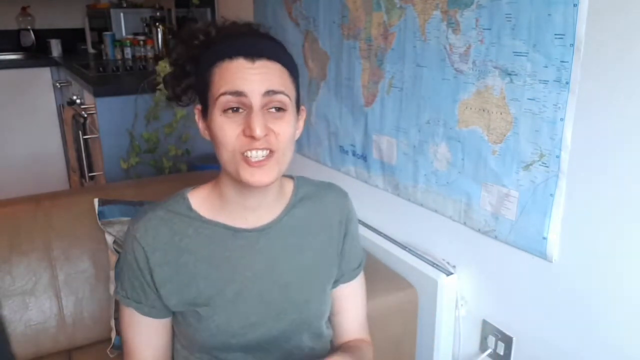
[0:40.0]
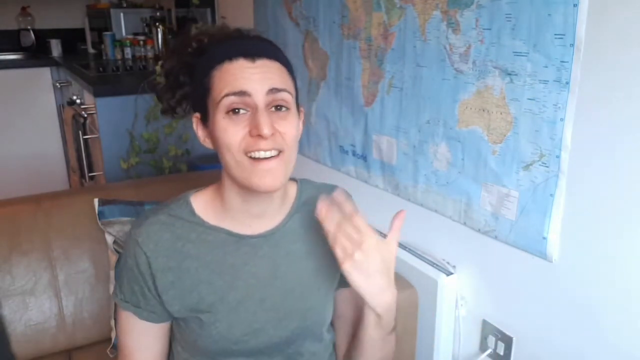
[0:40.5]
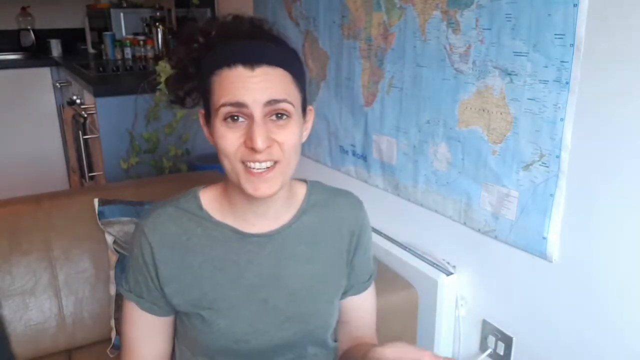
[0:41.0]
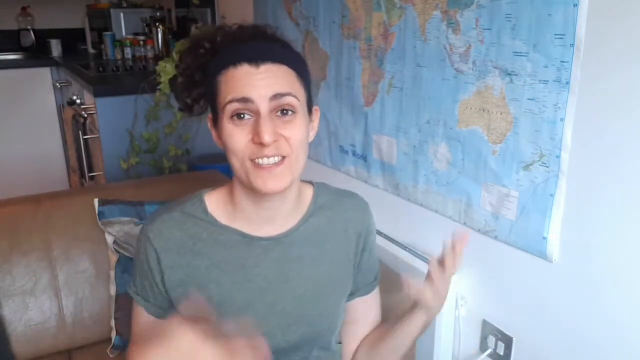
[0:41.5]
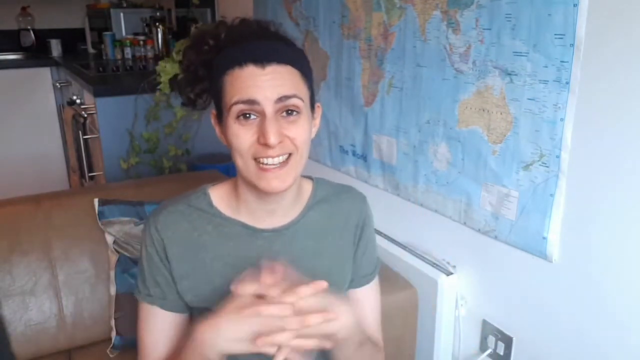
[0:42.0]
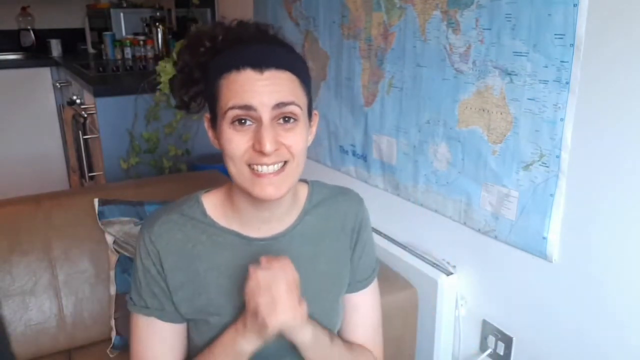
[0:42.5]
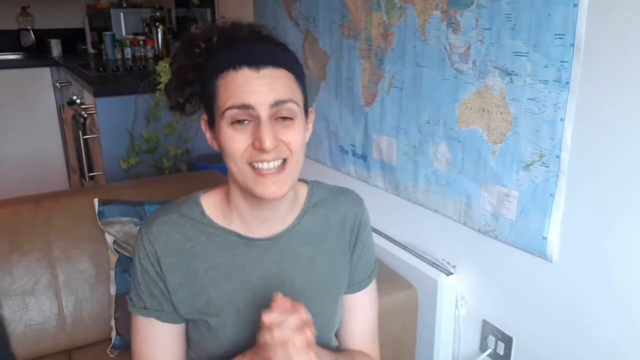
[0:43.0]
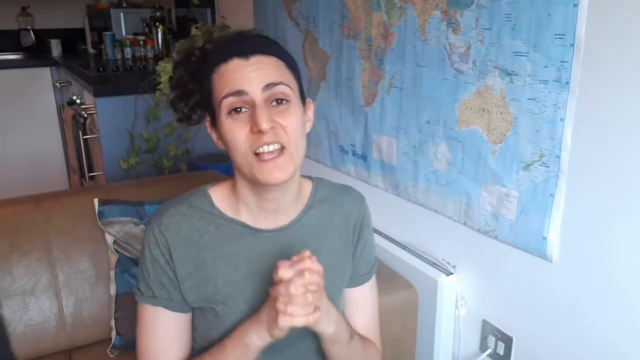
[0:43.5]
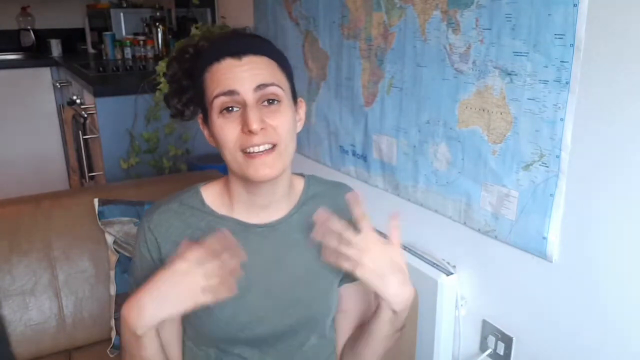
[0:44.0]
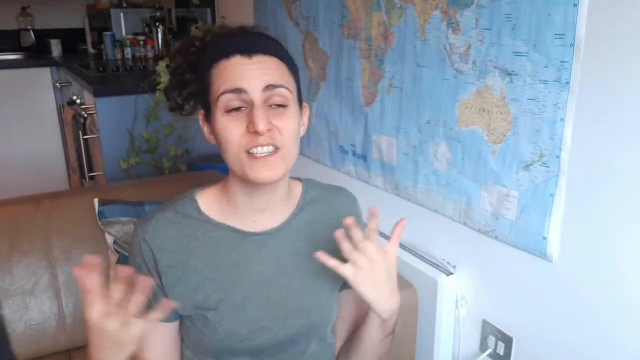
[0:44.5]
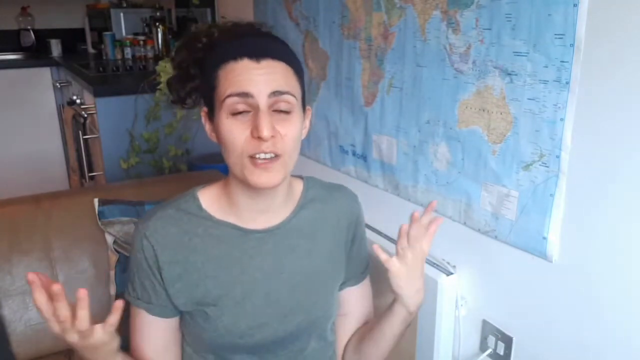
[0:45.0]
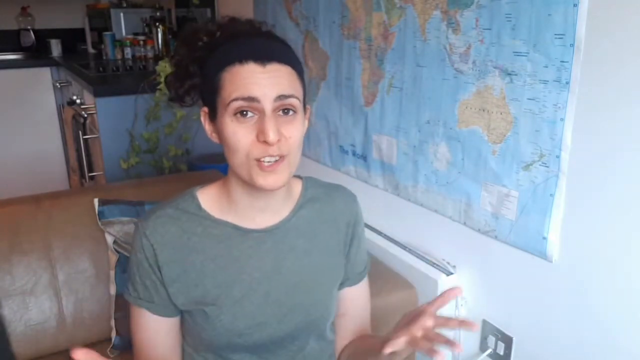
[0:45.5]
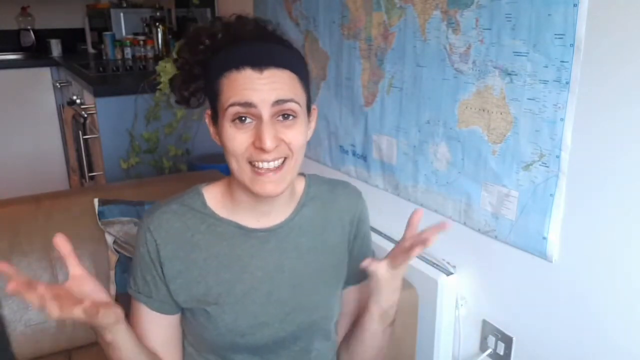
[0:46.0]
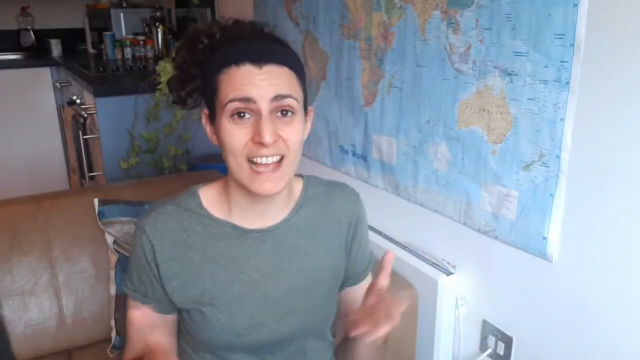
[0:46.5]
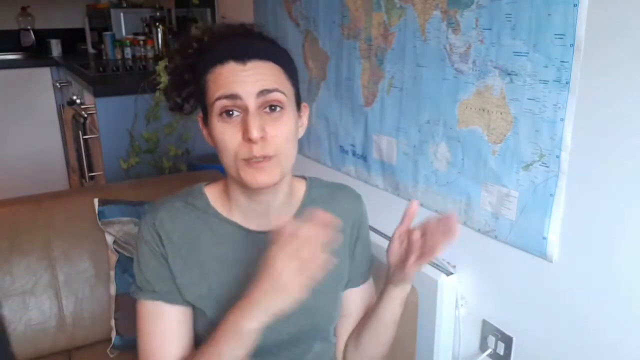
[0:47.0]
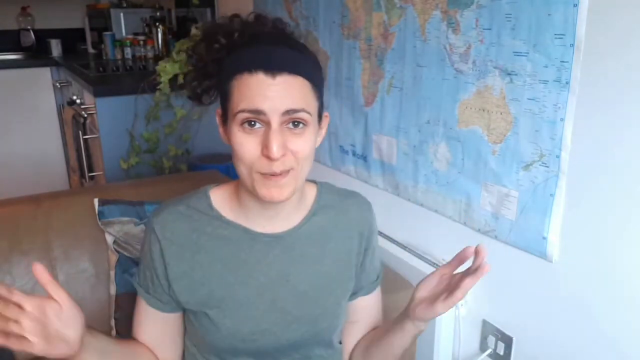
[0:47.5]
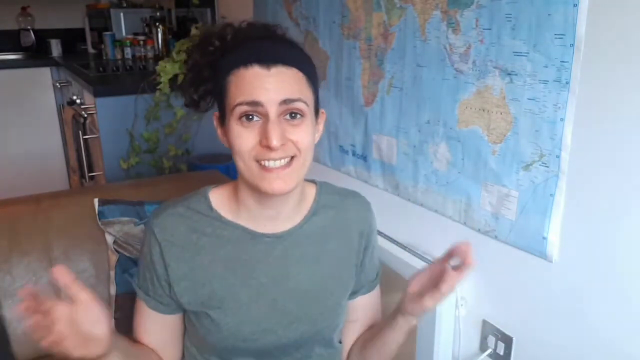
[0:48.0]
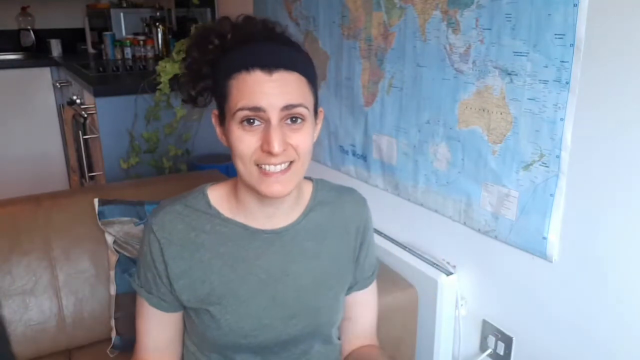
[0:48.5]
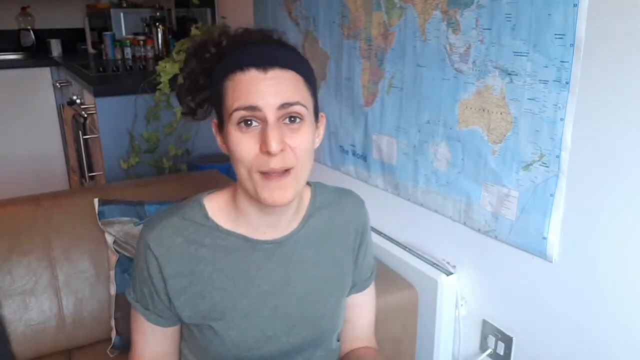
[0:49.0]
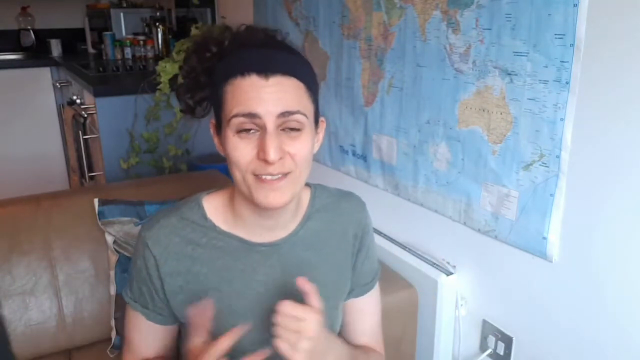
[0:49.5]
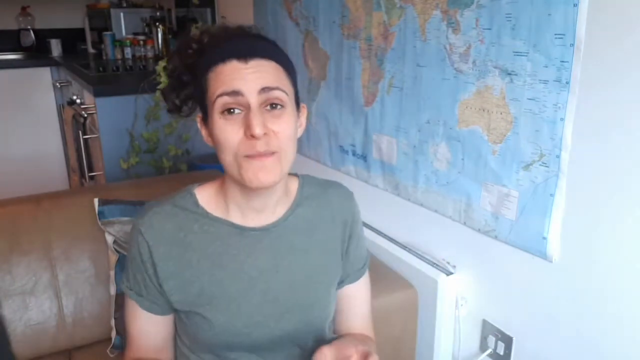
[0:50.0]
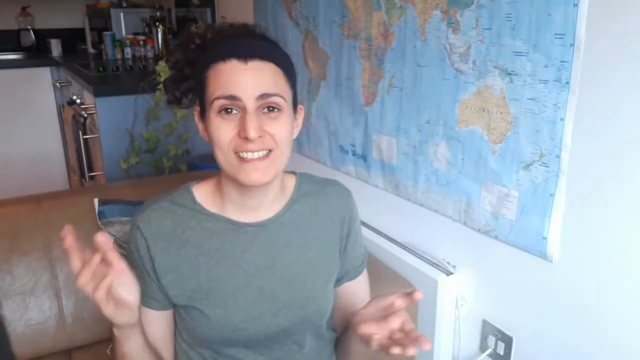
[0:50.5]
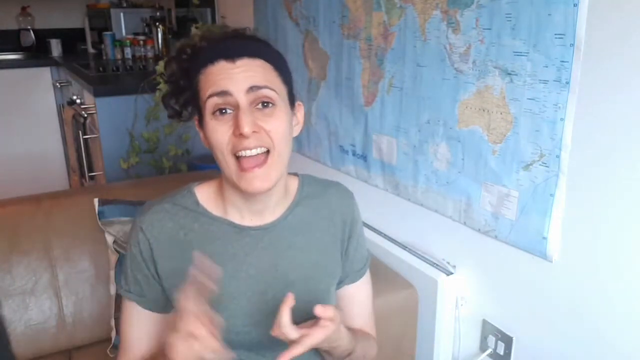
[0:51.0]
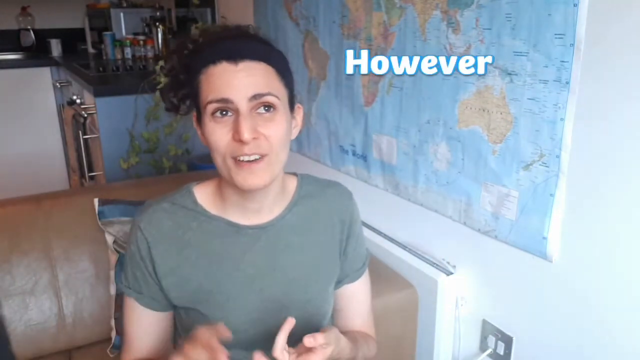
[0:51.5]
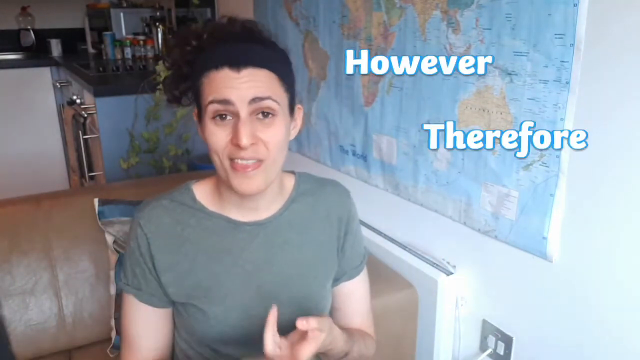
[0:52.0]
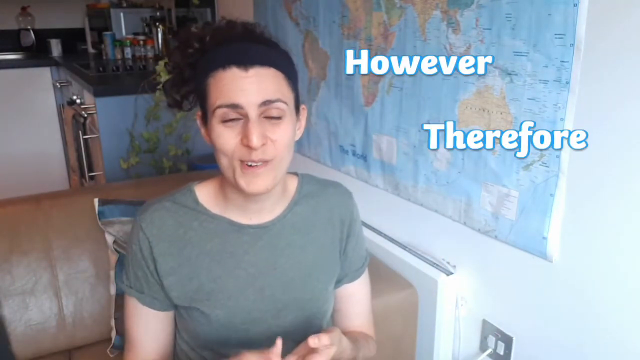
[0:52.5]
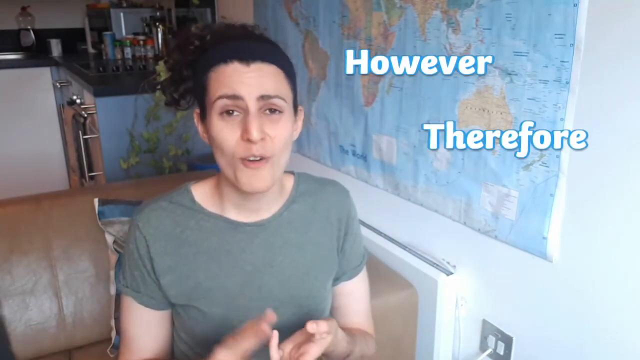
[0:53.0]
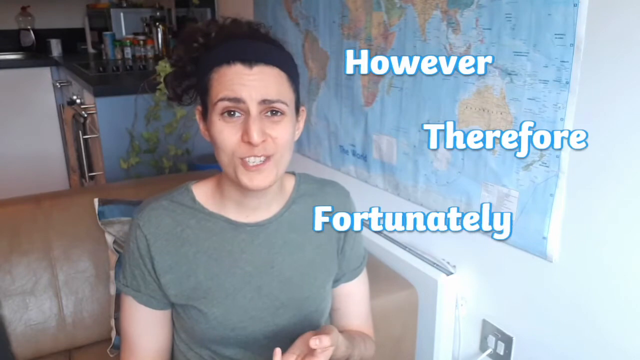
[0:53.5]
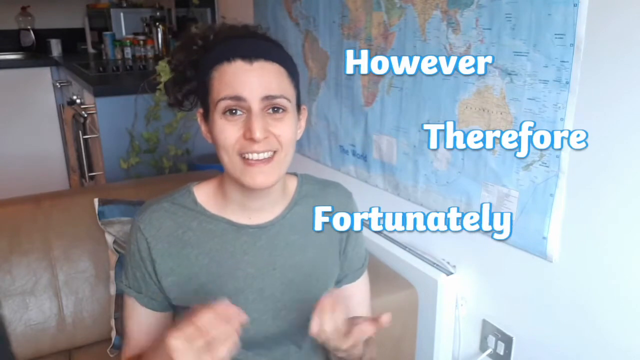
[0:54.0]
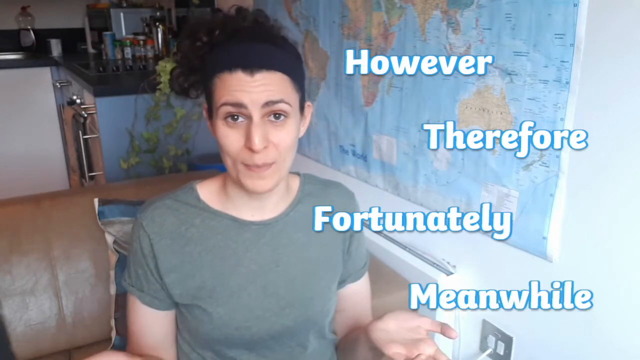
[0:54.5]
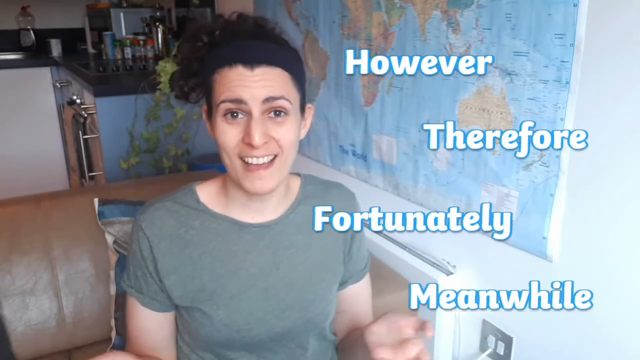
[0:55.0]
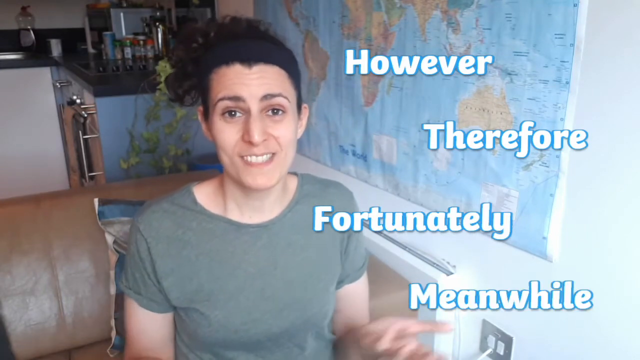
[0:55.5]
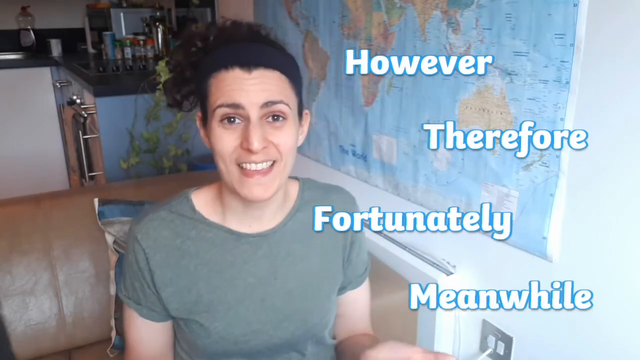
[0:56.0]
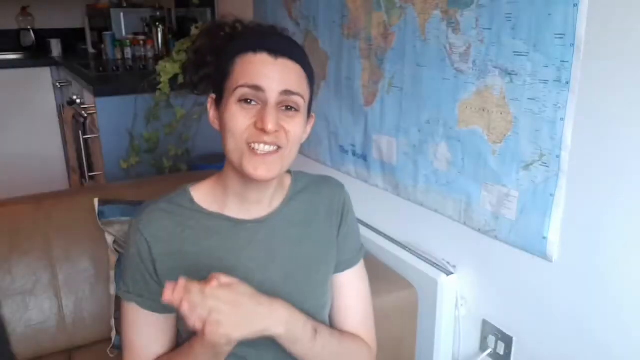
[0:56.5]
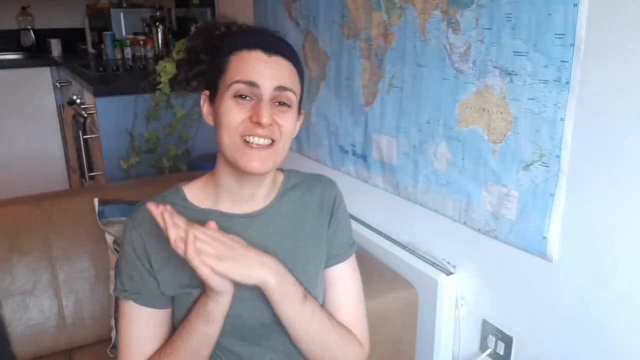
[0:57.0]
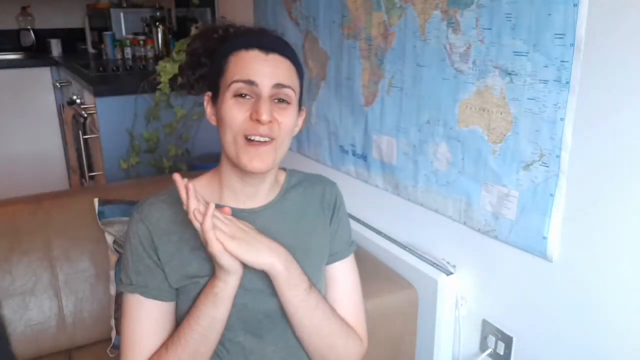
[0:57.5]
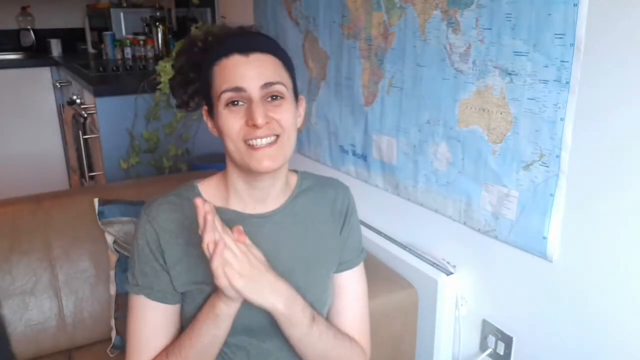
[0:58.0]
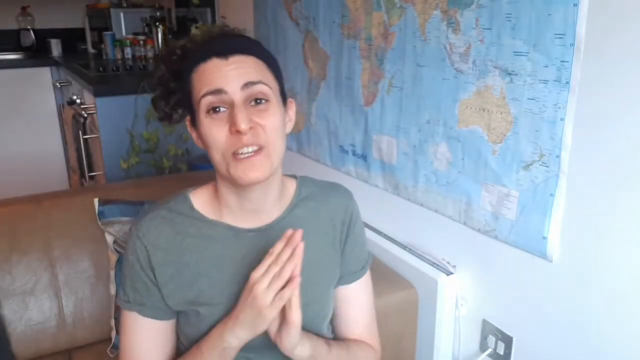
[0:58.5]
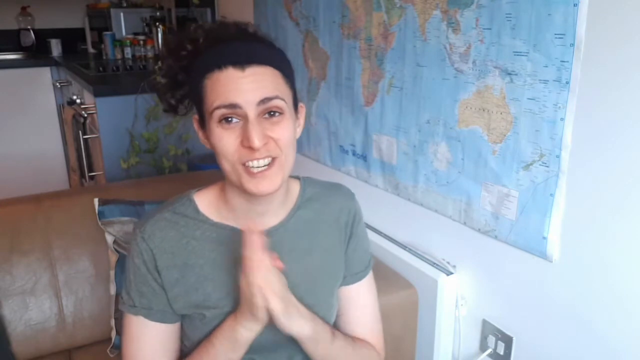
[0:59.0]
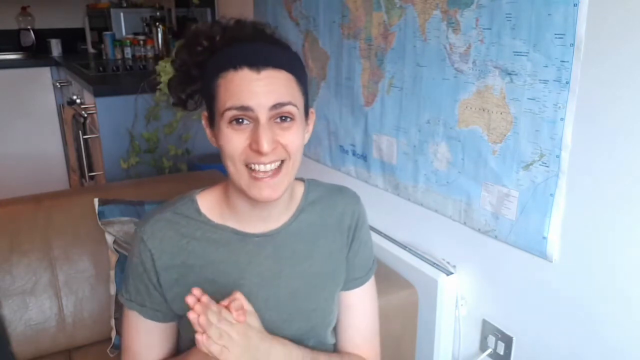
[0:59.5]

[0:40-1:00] The woman keeps talking right to the camera, using her hands as she speaks. The words "however," "therefore," "fortunately," and "meanwhile" now appear. She smiles and looks happy as she talks into the camera.